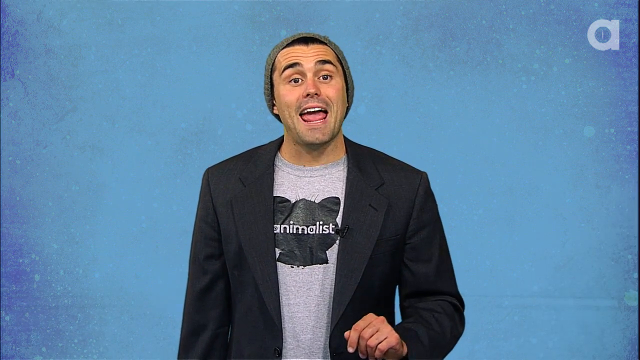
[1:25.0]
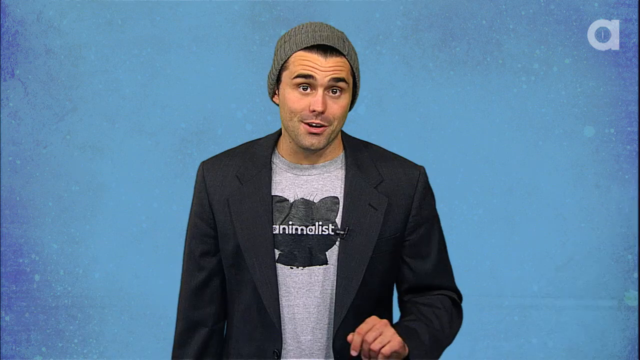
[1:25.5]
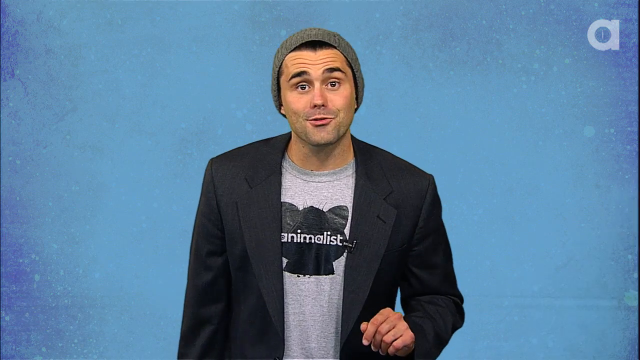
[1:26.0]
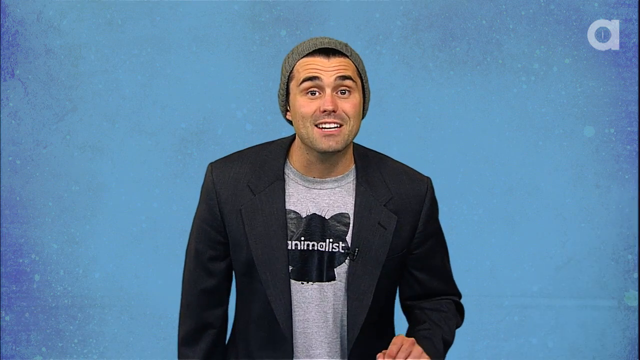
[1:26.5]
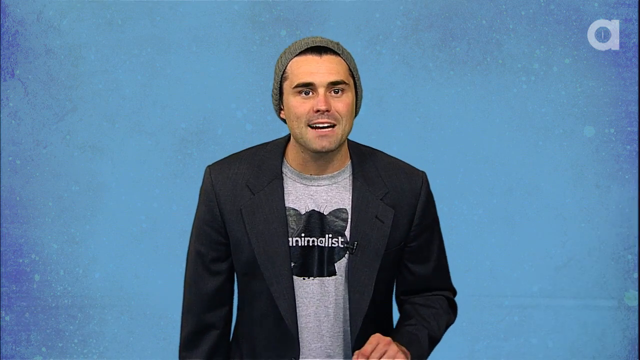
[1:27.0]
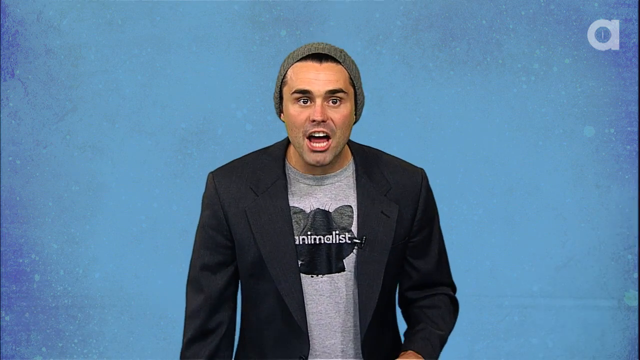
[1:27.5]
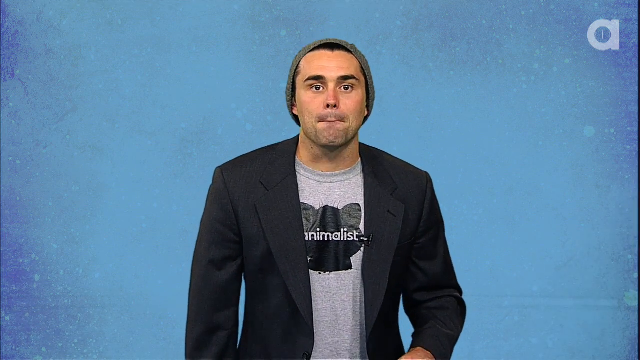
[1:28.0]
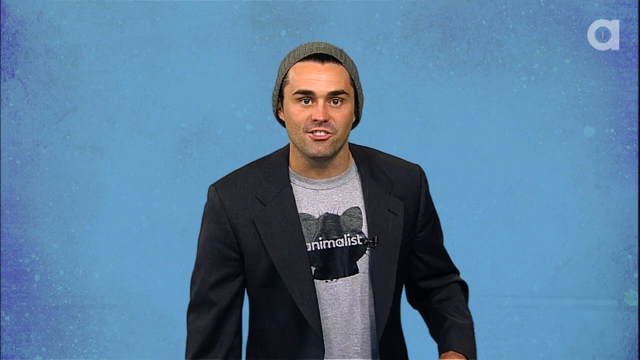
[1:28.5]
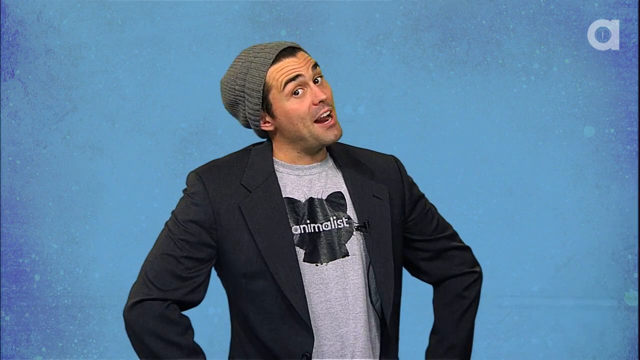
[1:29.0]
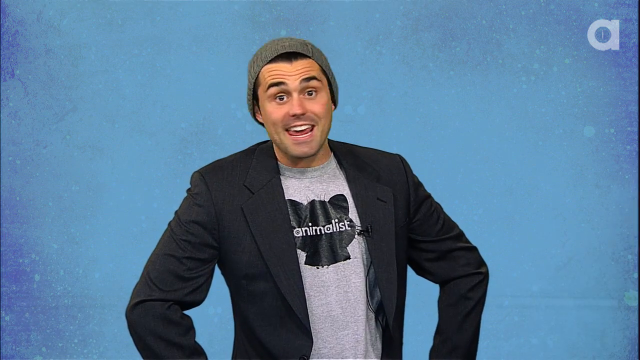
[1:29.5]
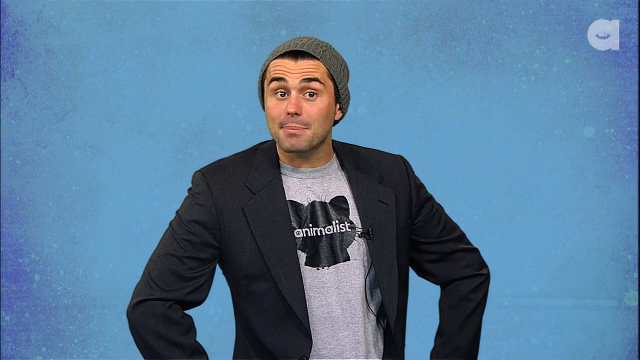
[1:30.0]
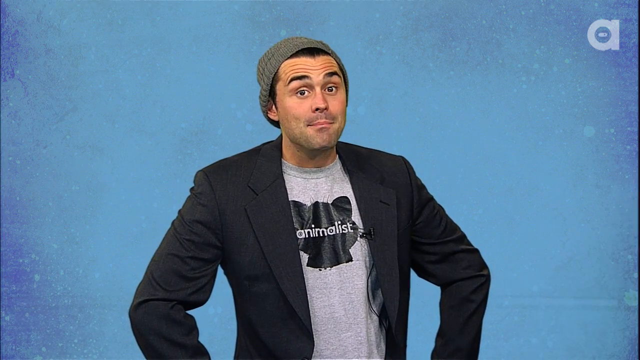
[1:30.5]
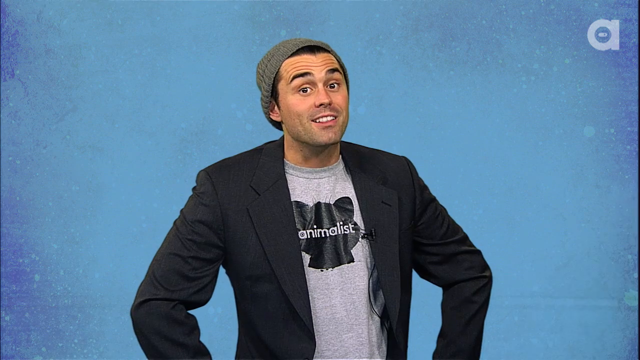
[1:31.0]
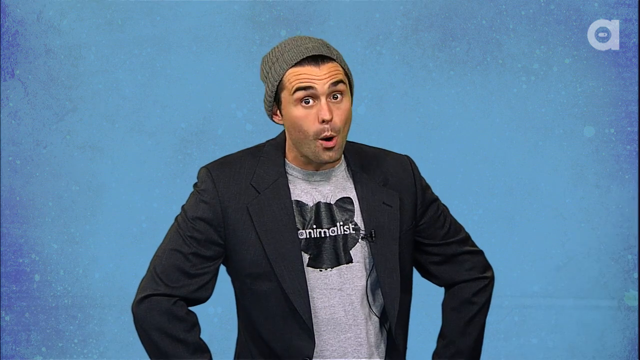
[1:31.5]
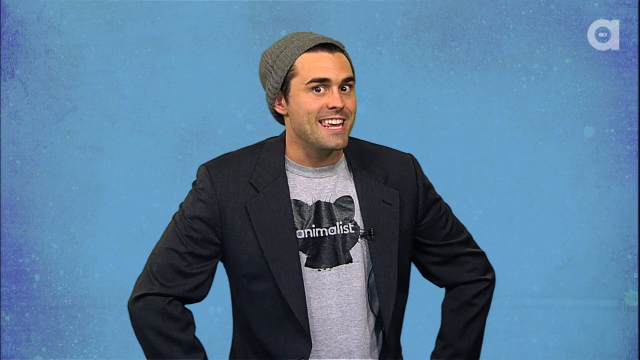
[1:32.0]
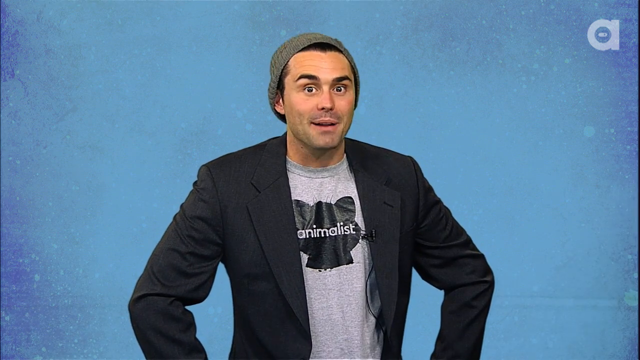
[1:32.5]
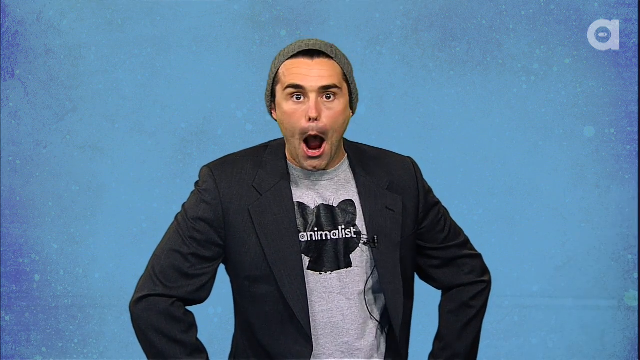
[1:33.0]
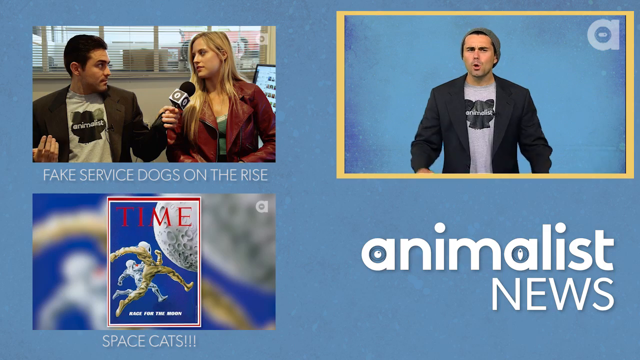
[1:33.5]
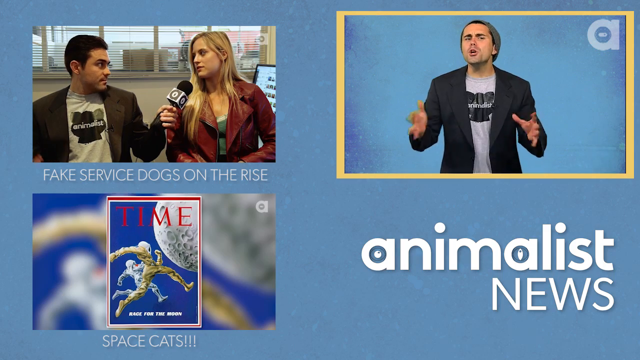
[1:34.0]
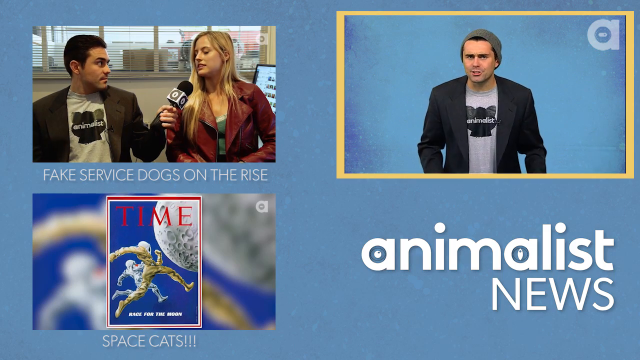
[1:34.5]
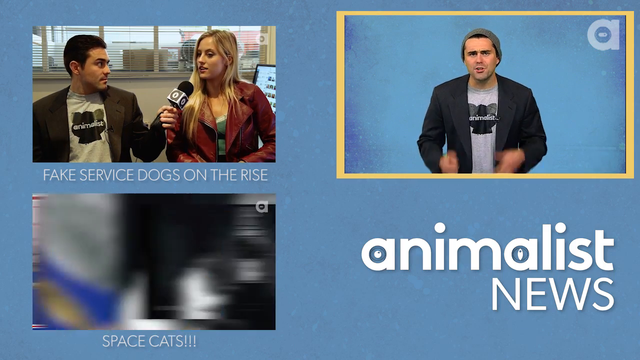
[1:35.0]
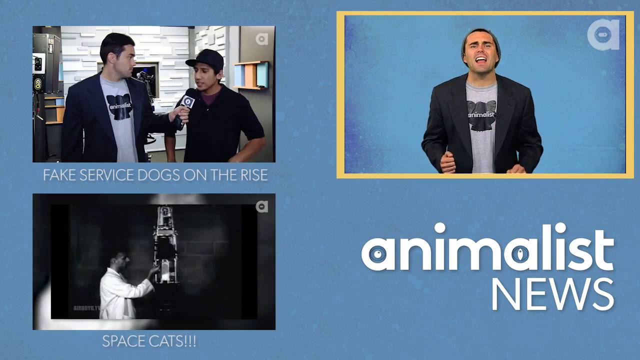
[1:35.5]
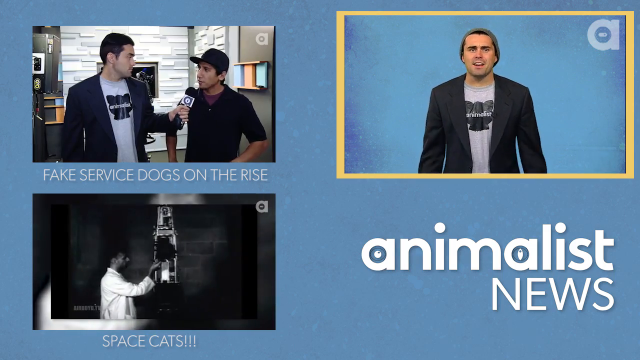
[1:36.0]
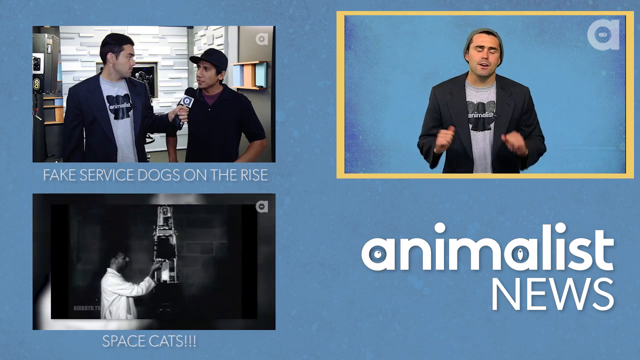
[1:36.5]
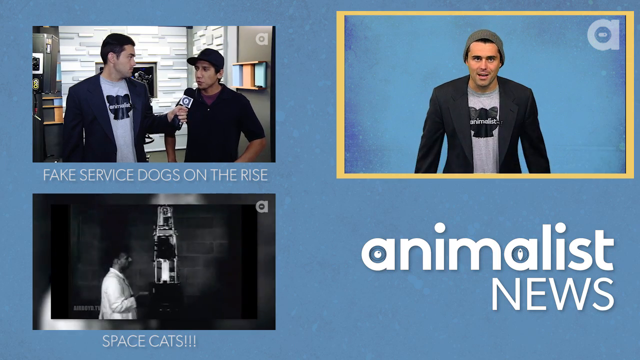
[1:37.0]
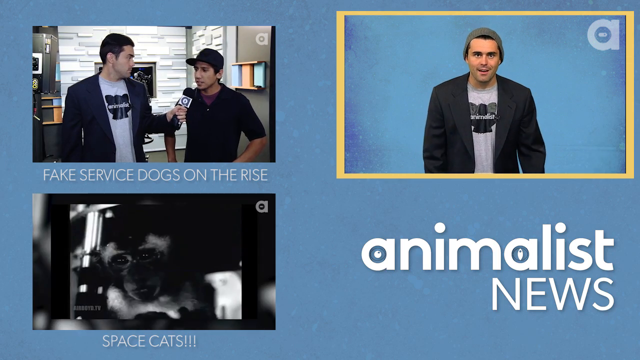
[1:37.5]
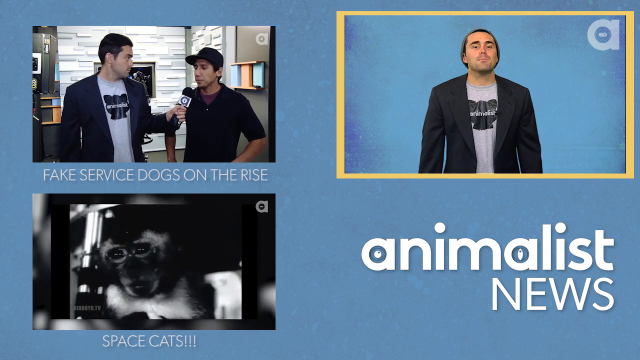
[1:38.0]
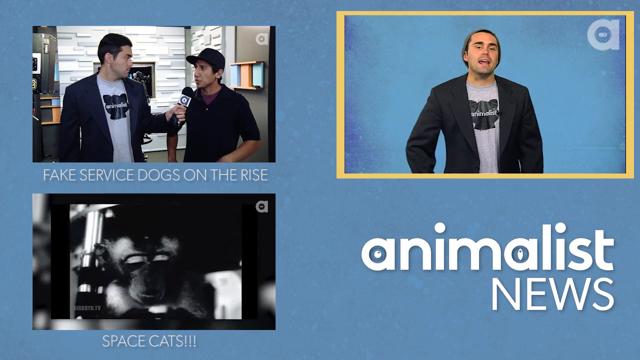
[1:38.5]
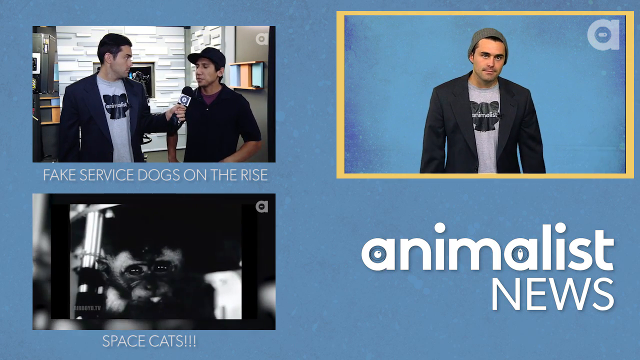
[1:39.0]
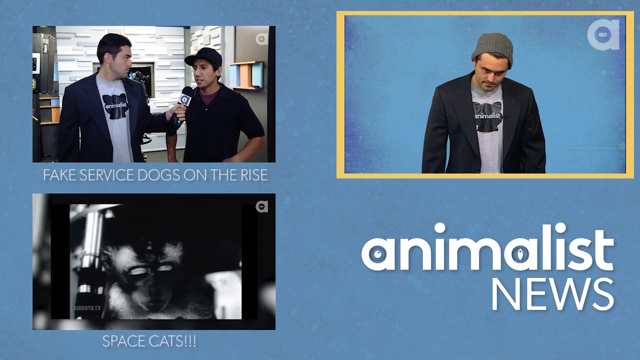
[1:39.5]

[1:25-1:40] The host is in front of the blue screen, speaking animatedly at the camera. It then cuts to a Zoom-like setup with boxes on the screen: the host is in the top right box; the top left box shows a man who looks like a reporter speaking to someone; the bottom left box shows stock footage of what looks like monkeys in a scientific study; and the bottom right corner shows the logo "animalist news" in white lowercase font. As the host speaks in the top right box, the top left box switches between different interviews with people in the field, and the bottom left box switches between old stock footage of scientists and monkeys.